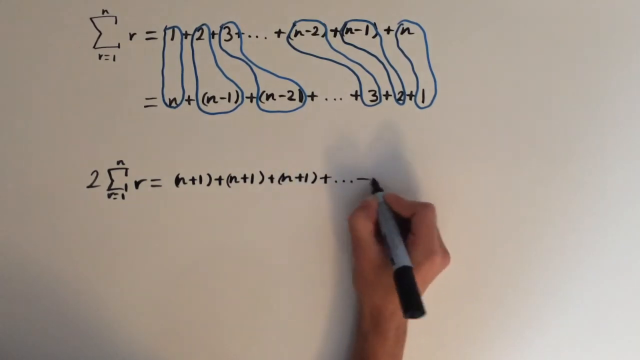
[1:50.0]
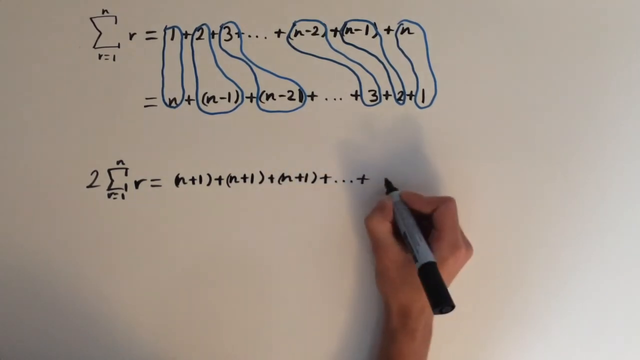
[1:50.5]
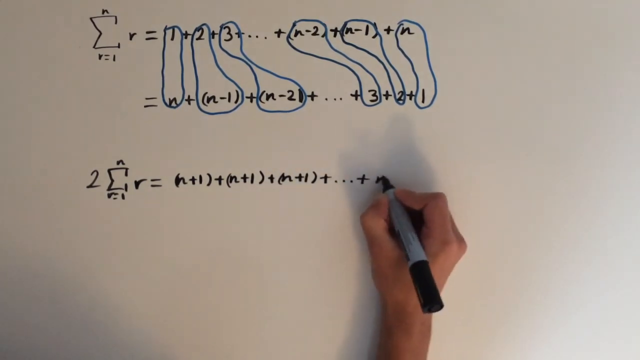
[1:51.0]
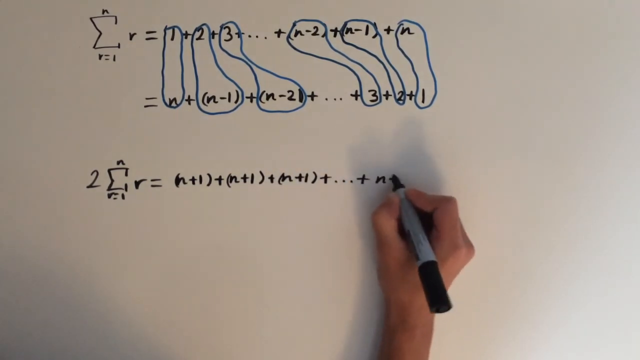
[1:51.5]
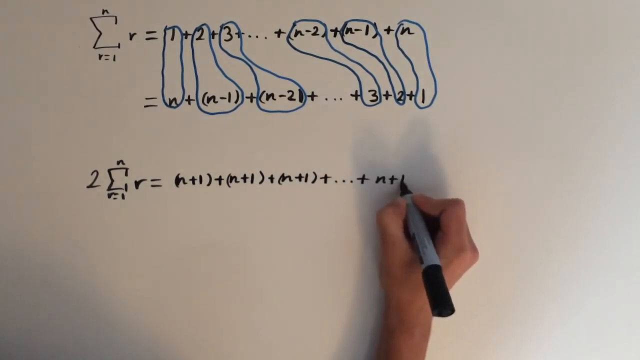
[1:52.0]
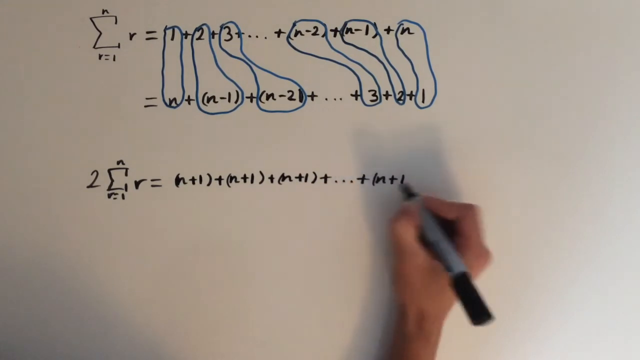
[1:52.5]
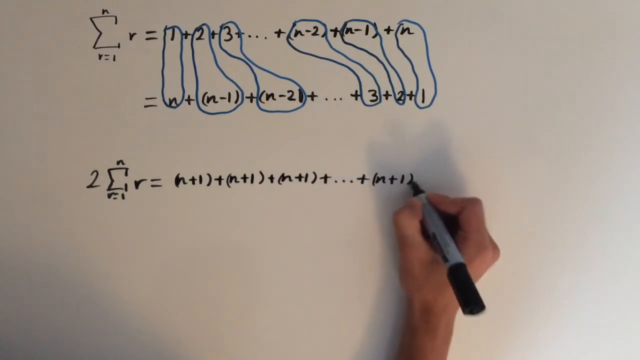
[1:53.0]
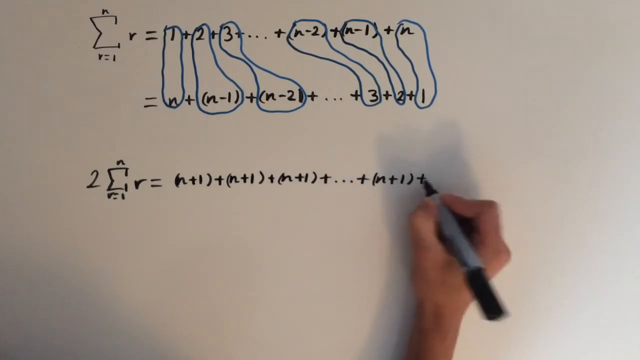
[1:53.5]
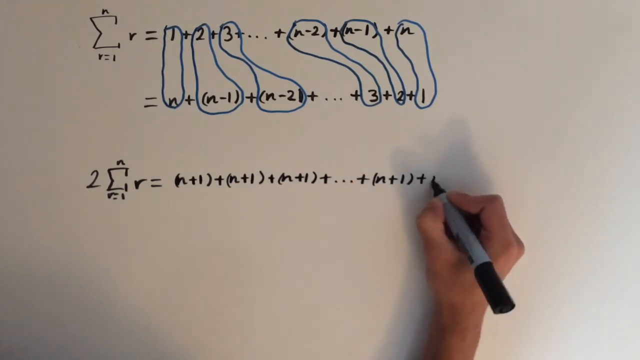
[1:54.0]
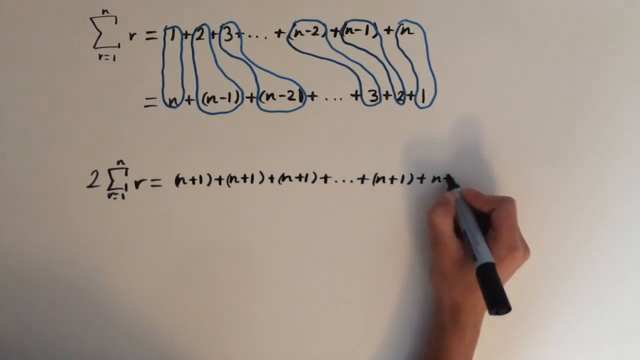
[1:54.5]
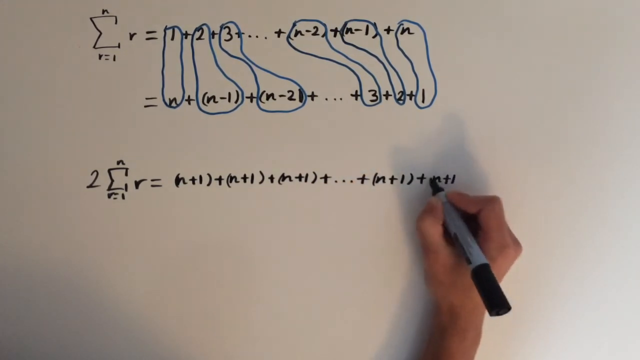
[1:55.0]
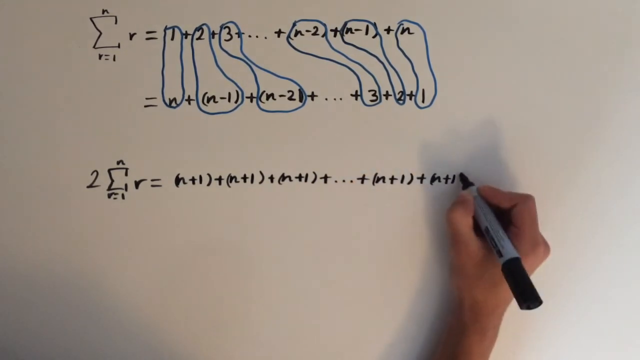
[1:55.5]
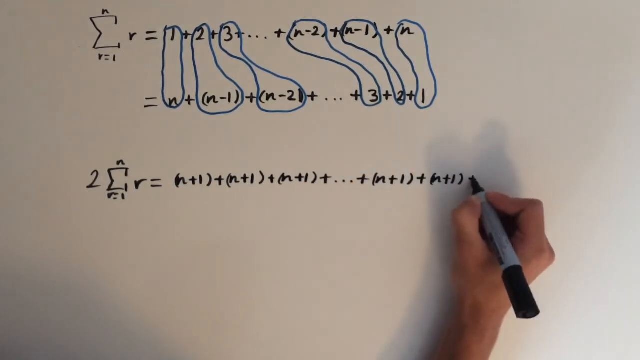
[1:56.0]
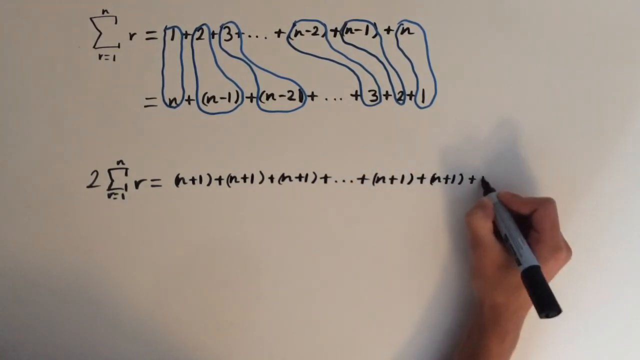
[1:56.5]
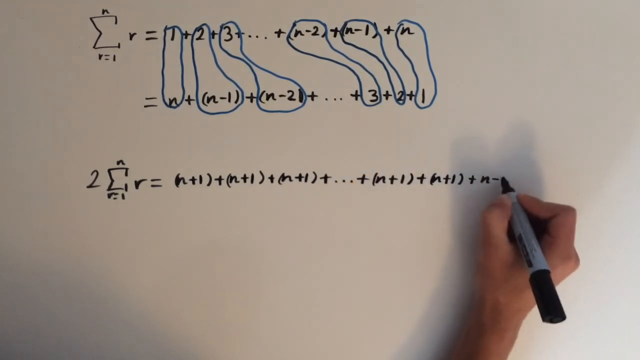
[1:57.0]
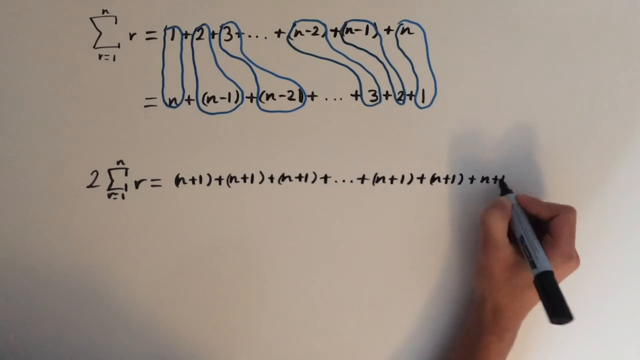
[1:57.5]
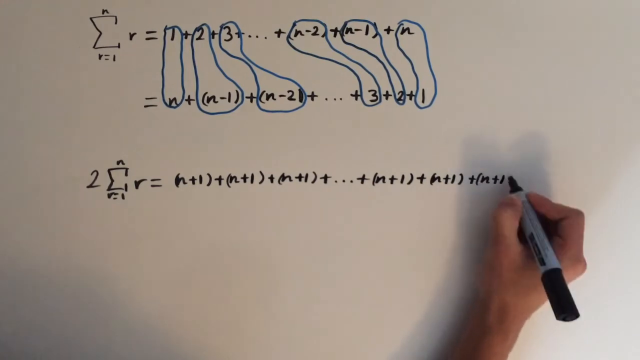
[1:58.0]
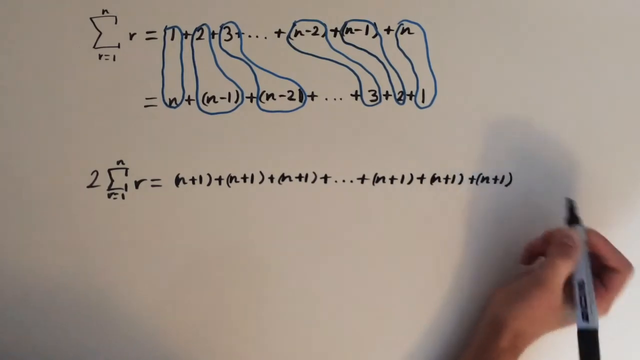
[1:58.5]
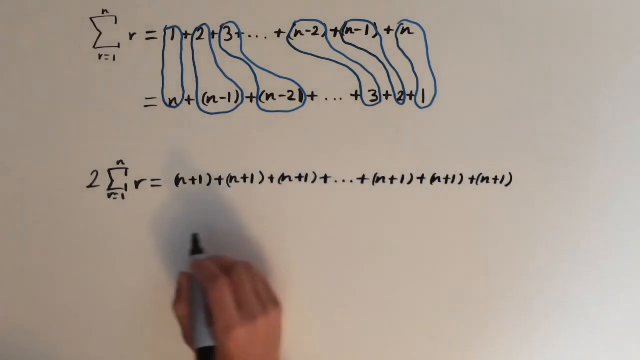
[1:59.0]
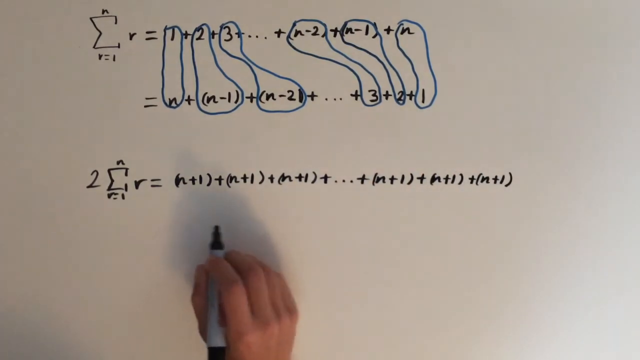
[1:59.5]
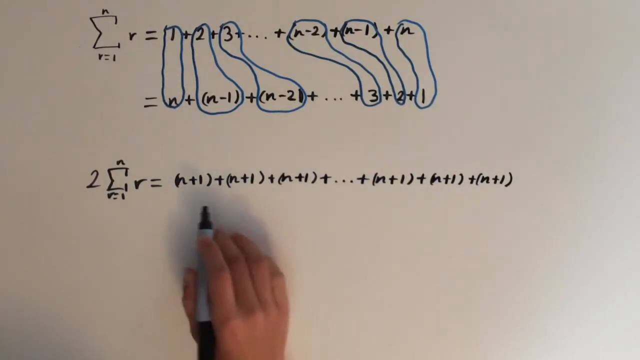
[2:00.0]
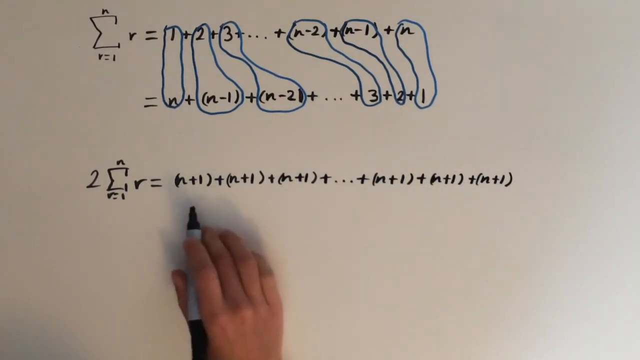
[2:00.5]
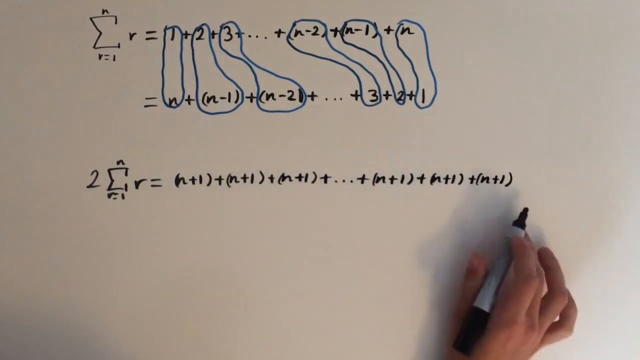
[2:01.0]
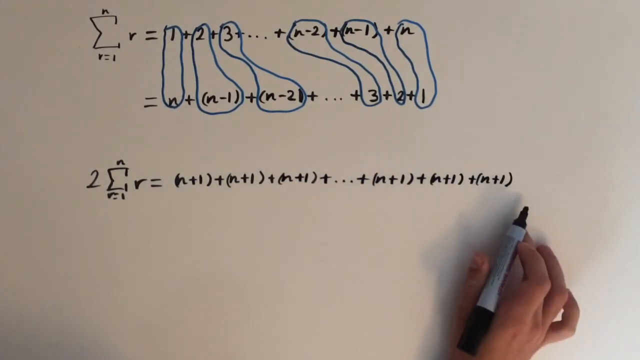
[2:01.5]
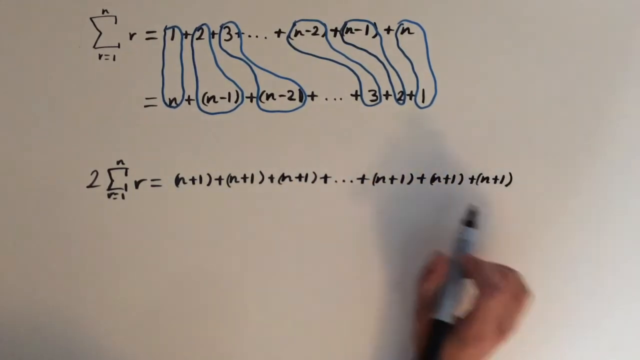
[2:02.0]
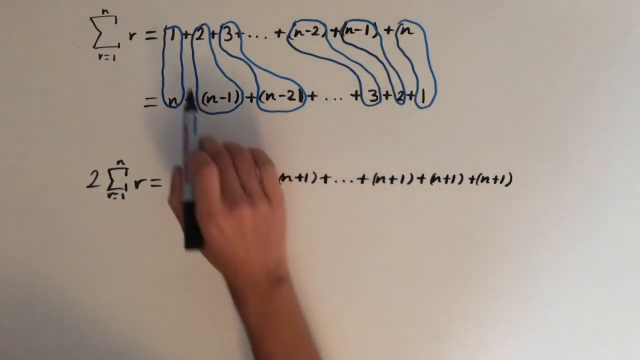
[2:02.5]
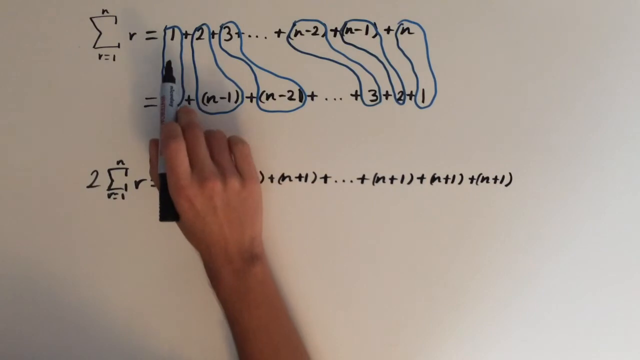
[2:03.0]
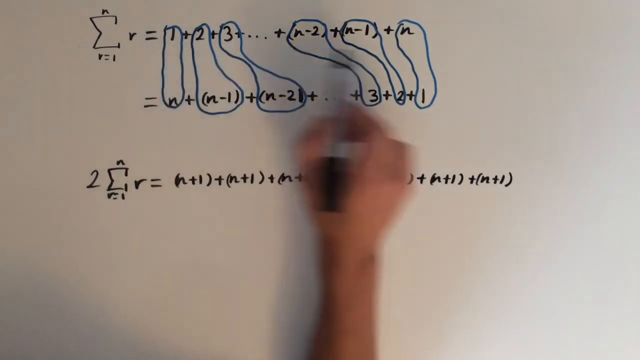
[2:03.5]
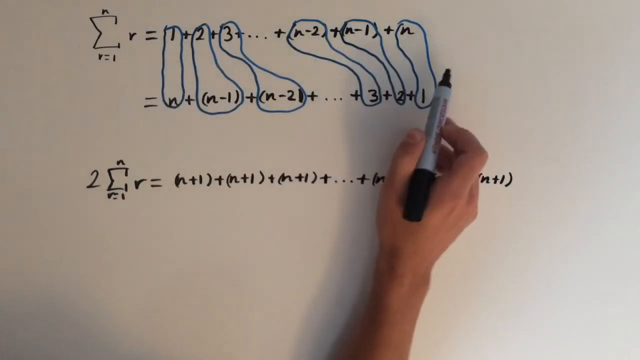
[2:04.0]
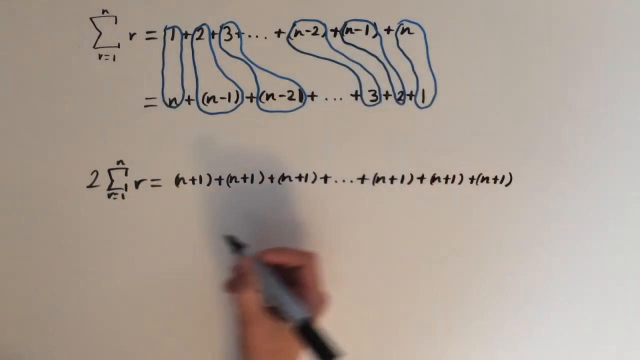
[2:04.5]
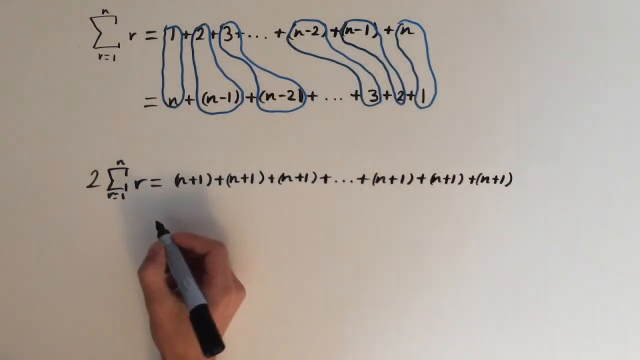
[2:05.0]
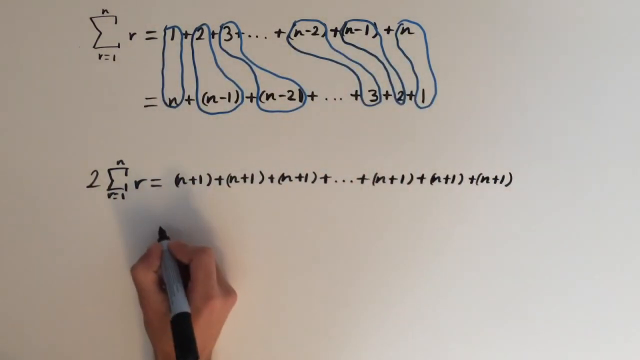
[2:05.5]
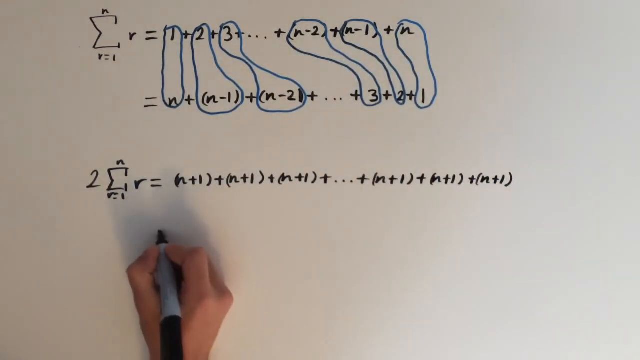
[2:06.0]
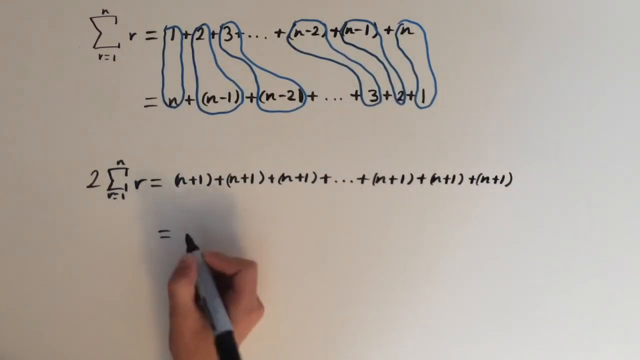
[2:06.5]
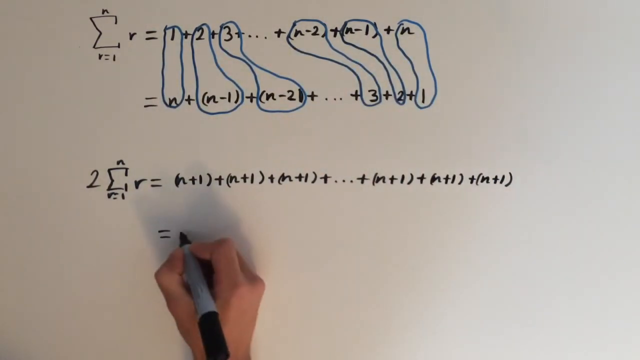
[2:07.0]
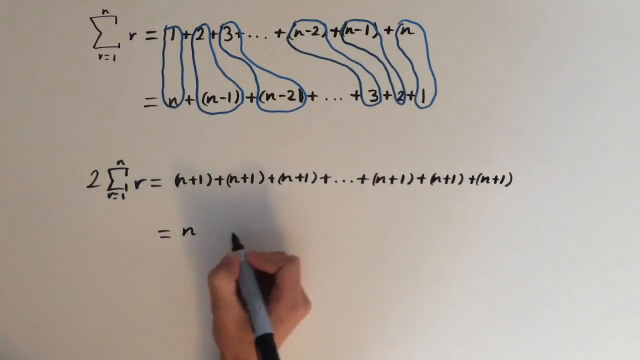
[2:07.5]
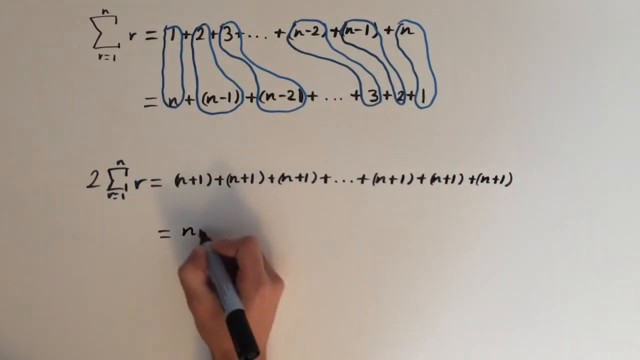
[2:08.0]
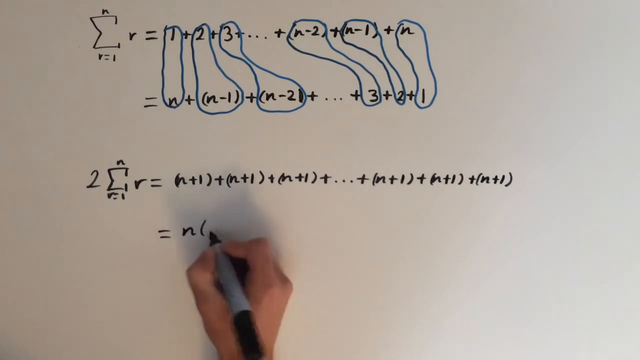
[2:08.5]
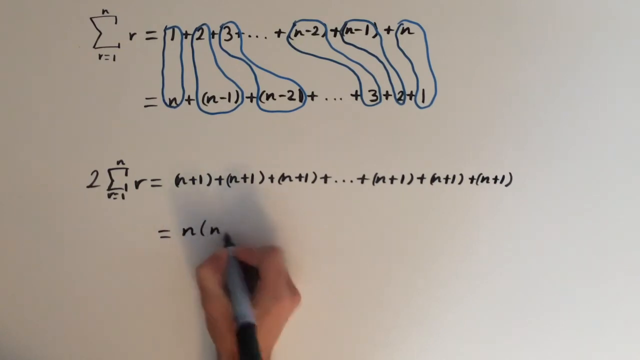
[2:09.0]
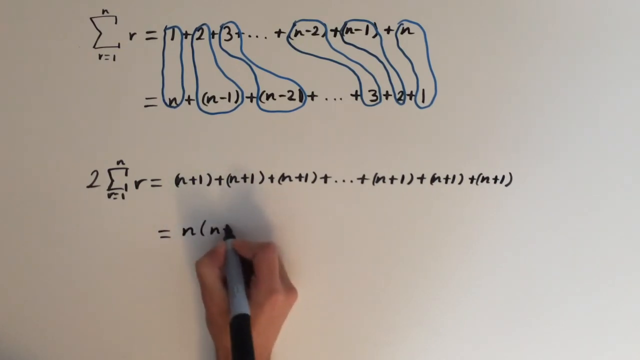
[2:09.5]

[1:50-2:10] The host continues finishing the line with repeated terms: + (n + 1) + (n + 1) + (n + 1) + (n + 1) + (n + 1). He hovers over the first line, indicating it matches this line, then drops down a line, writes an equals sign and begins the third line. His hand is white, pale and medium-sized, neither skinny nor fat. He uses a black marker with a black tip, a black lid and a grey body. Above, some elements are circled and bubbled in blue marker.